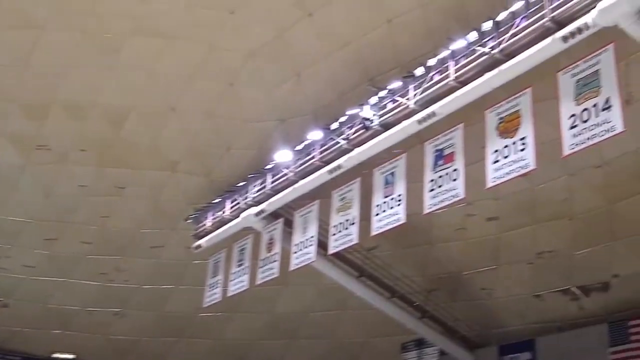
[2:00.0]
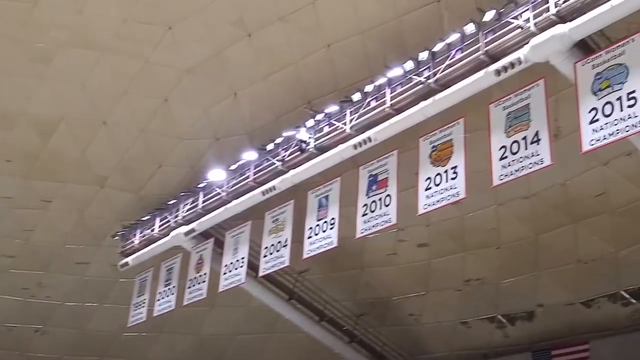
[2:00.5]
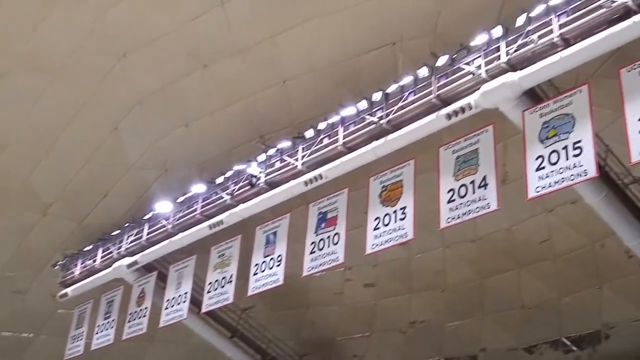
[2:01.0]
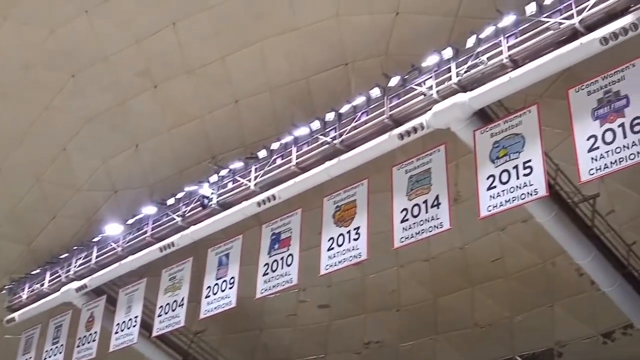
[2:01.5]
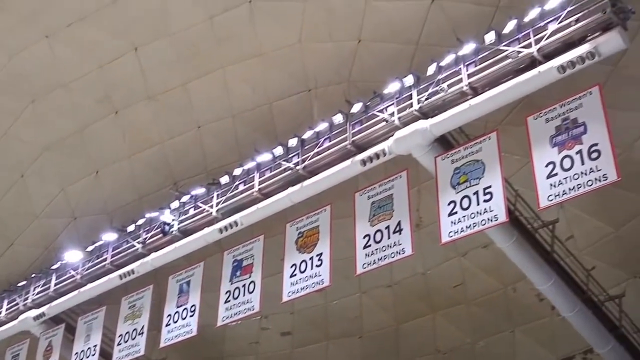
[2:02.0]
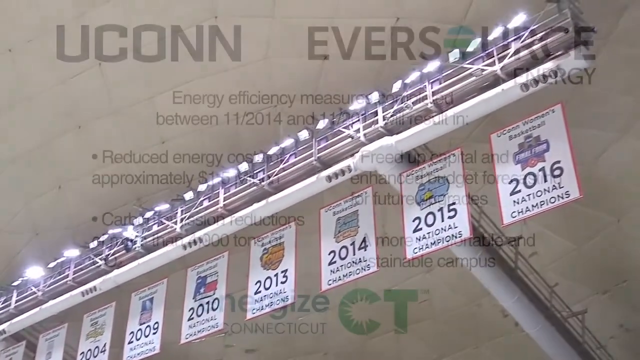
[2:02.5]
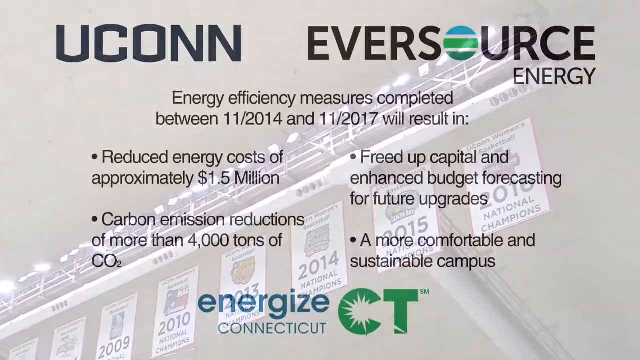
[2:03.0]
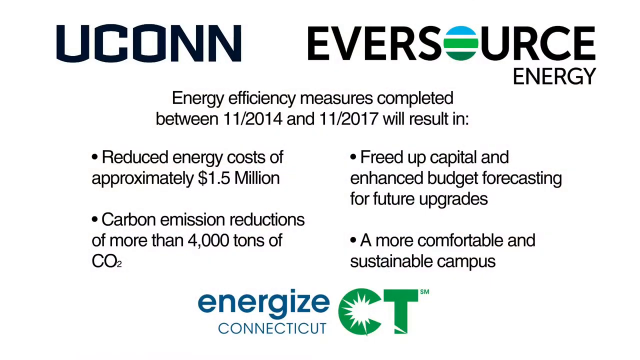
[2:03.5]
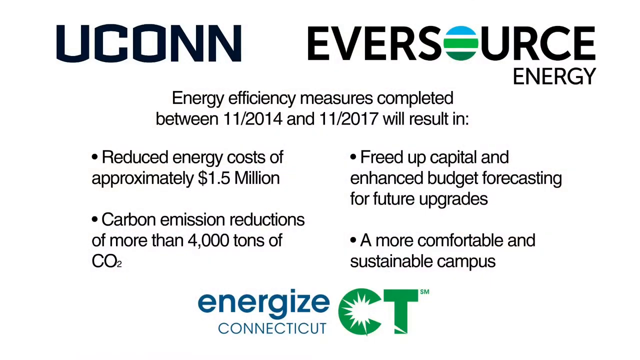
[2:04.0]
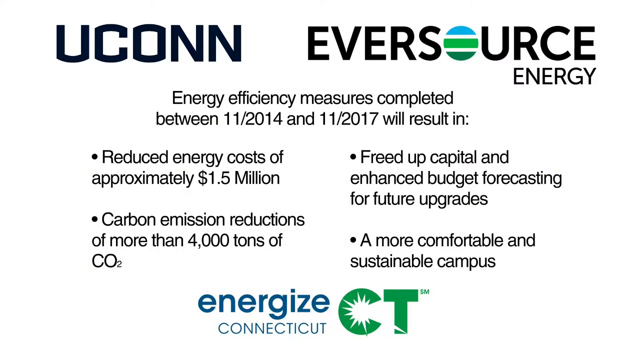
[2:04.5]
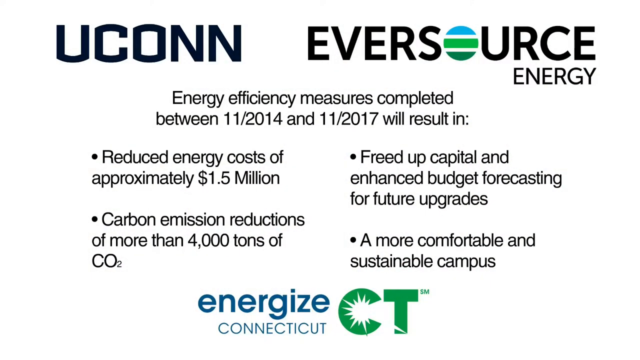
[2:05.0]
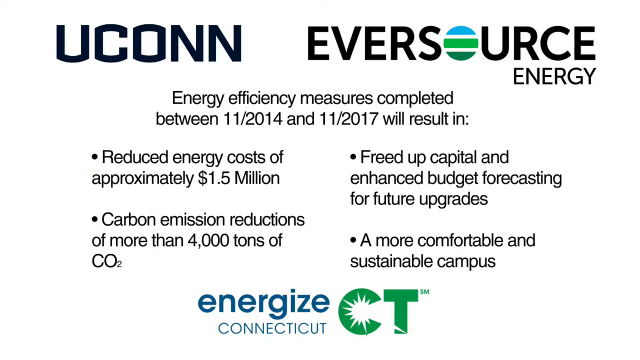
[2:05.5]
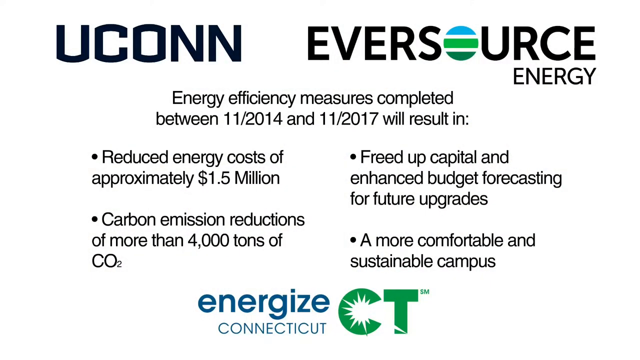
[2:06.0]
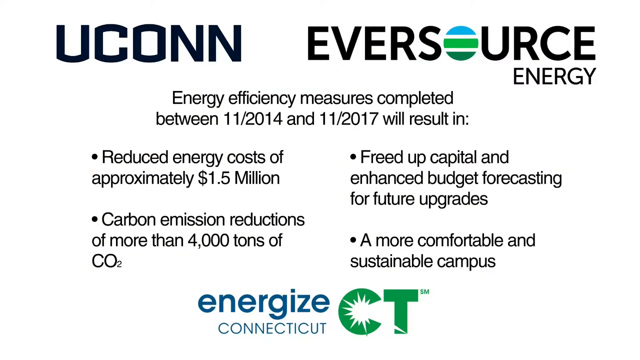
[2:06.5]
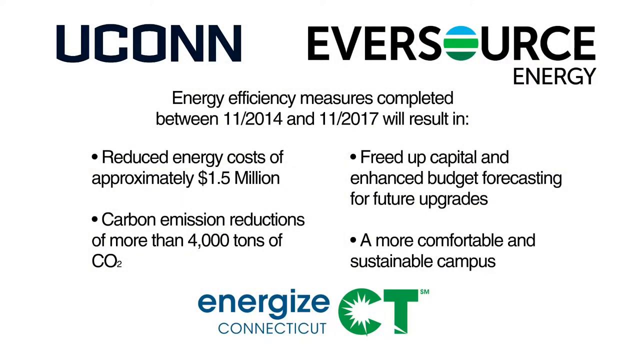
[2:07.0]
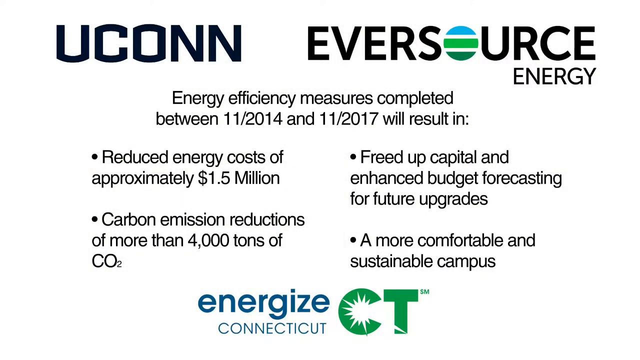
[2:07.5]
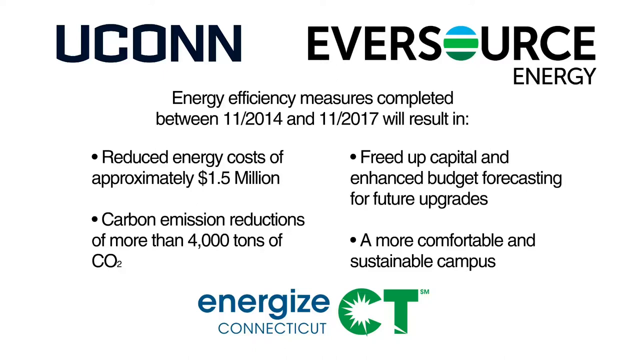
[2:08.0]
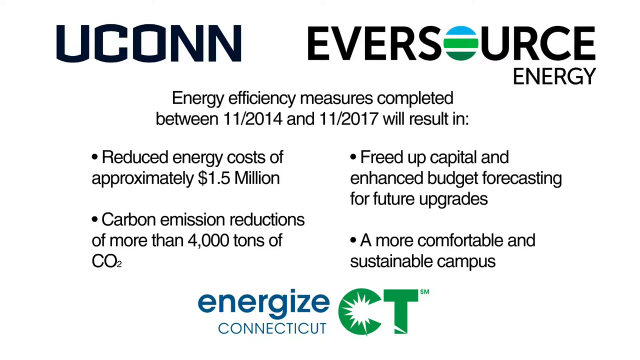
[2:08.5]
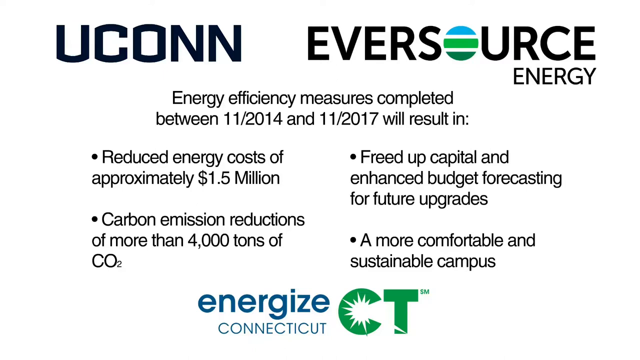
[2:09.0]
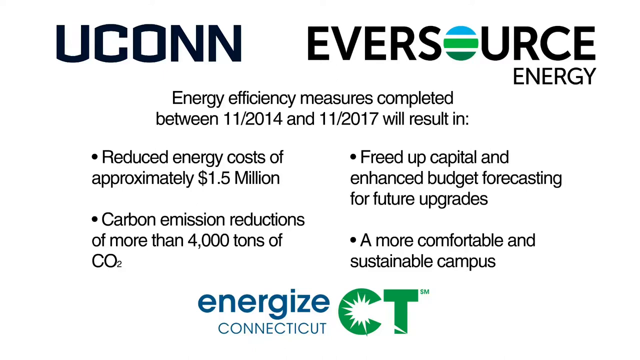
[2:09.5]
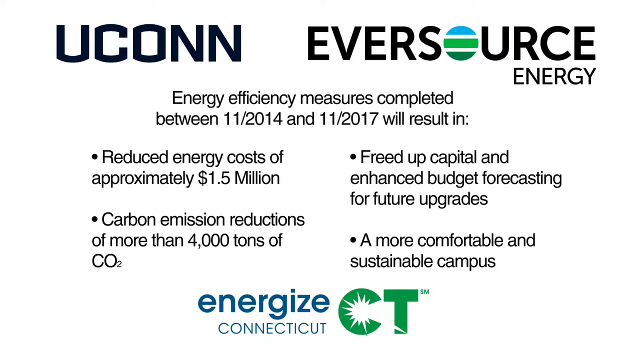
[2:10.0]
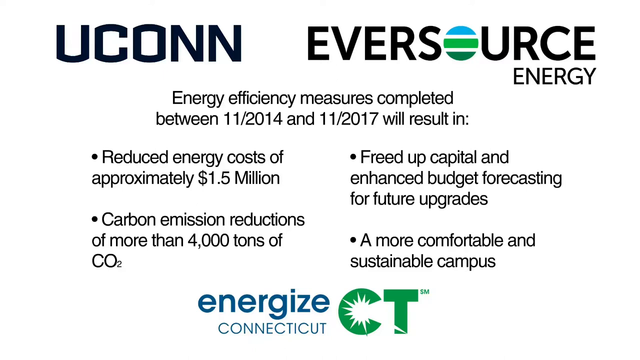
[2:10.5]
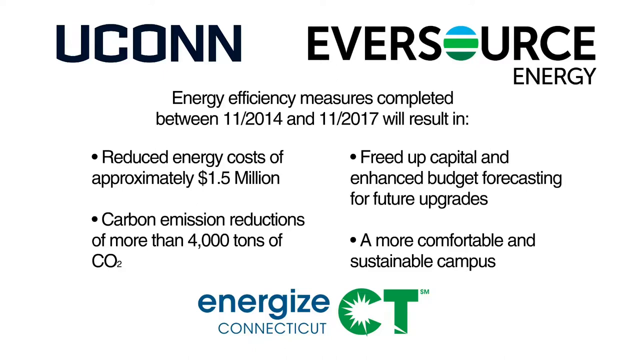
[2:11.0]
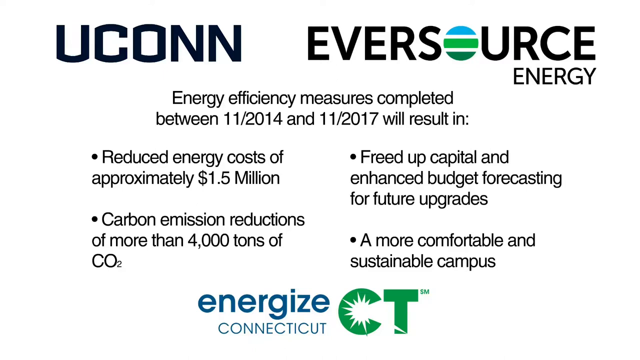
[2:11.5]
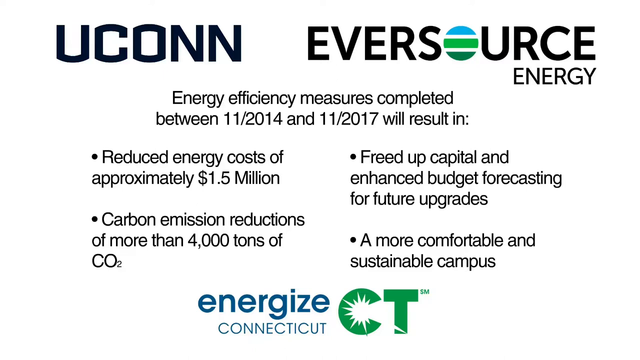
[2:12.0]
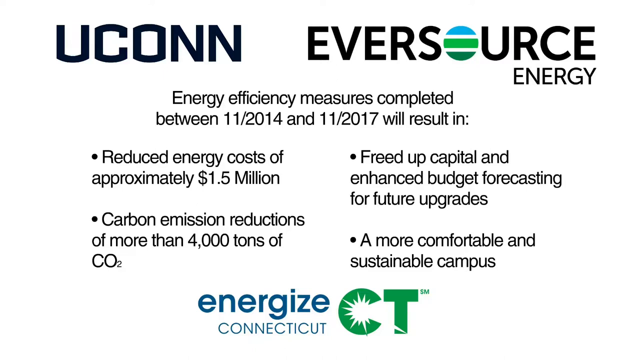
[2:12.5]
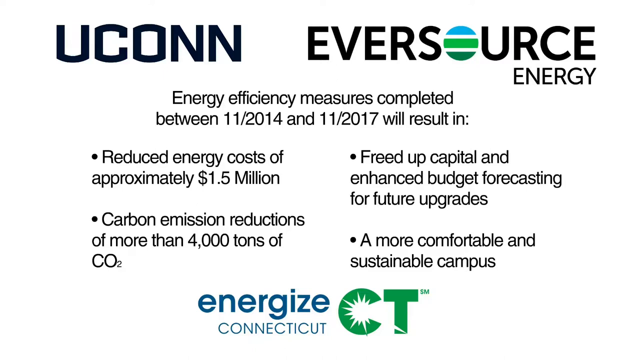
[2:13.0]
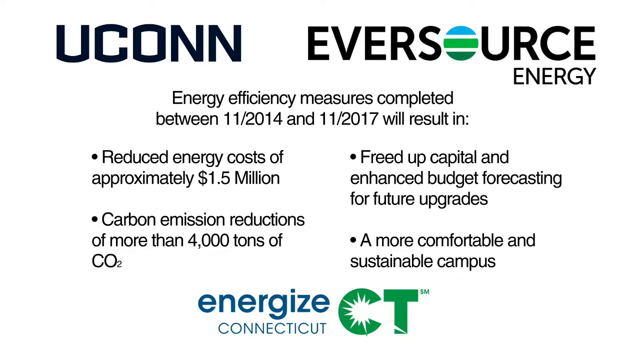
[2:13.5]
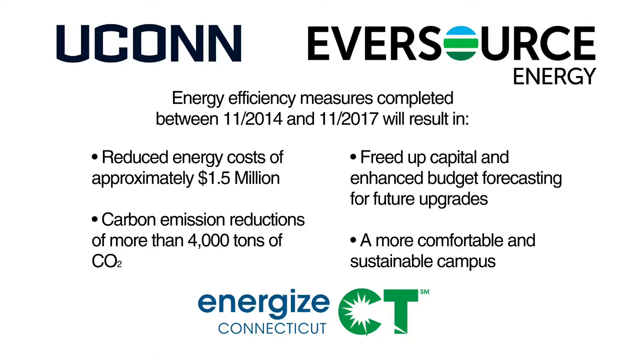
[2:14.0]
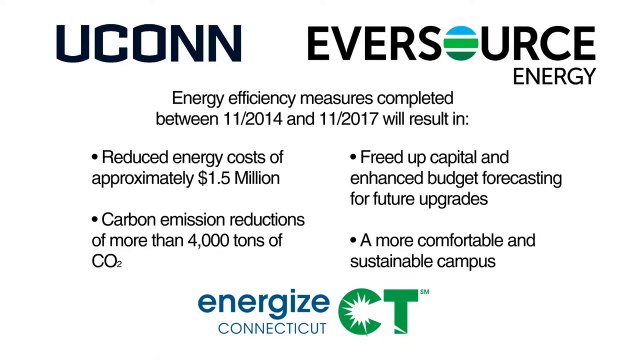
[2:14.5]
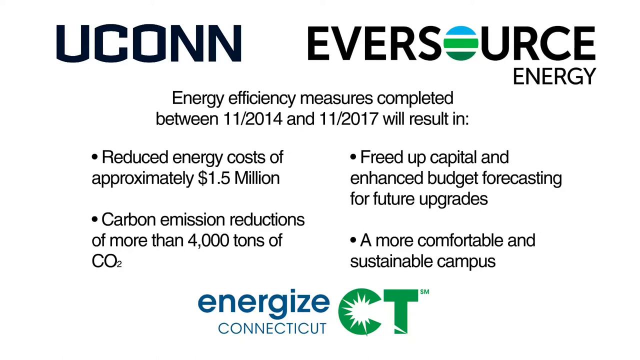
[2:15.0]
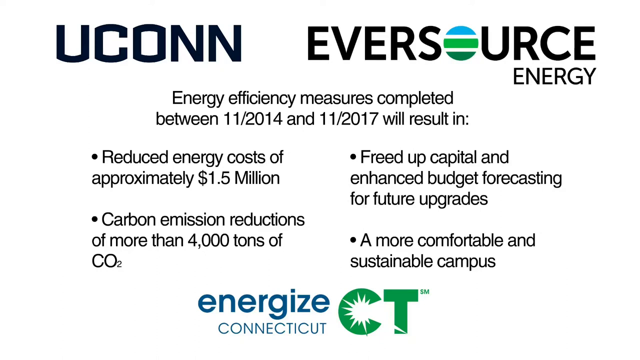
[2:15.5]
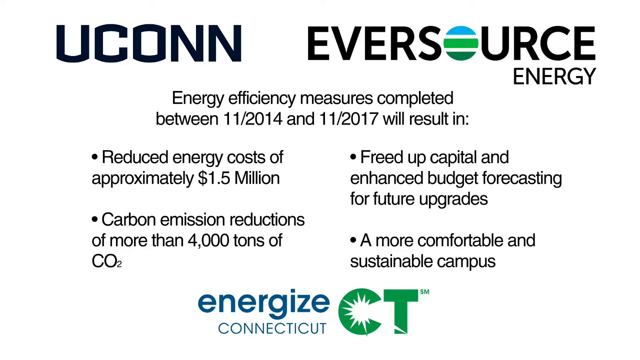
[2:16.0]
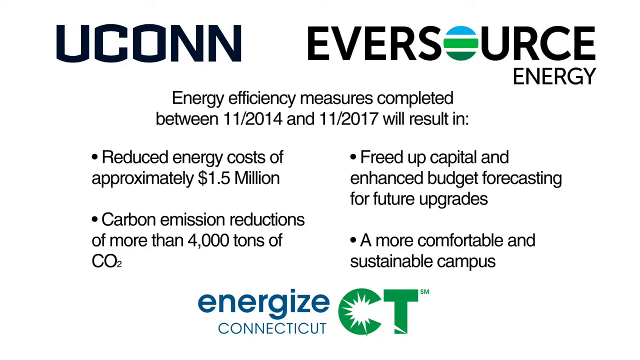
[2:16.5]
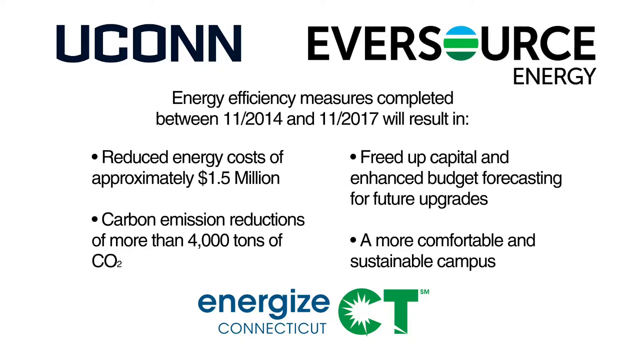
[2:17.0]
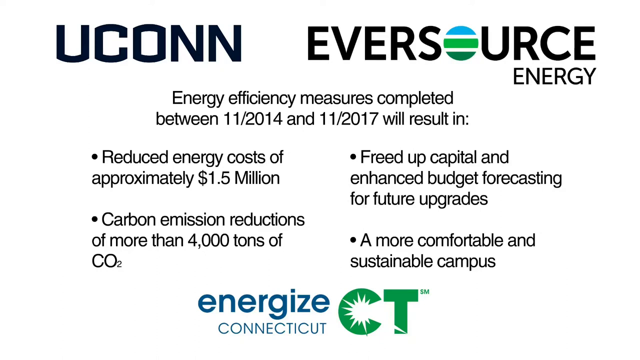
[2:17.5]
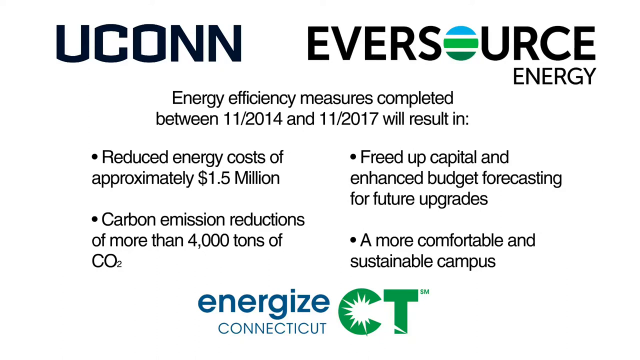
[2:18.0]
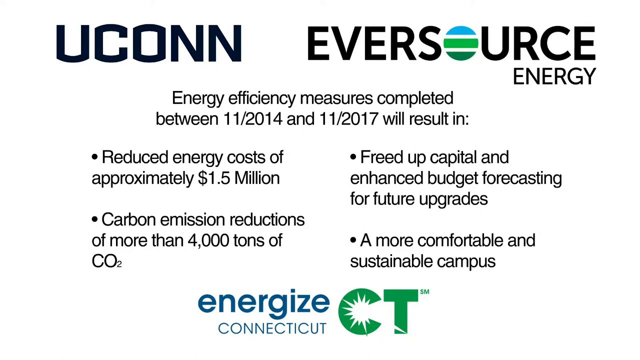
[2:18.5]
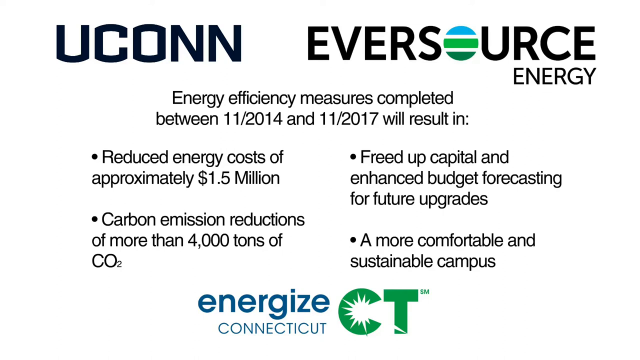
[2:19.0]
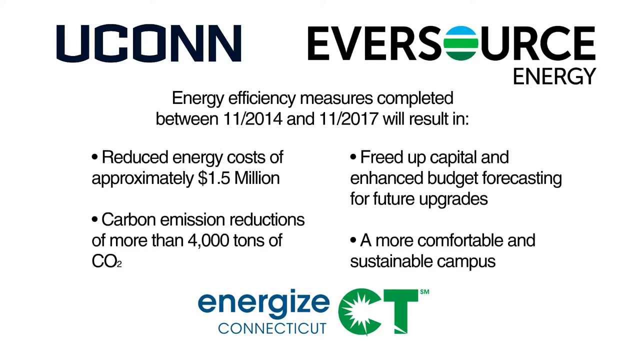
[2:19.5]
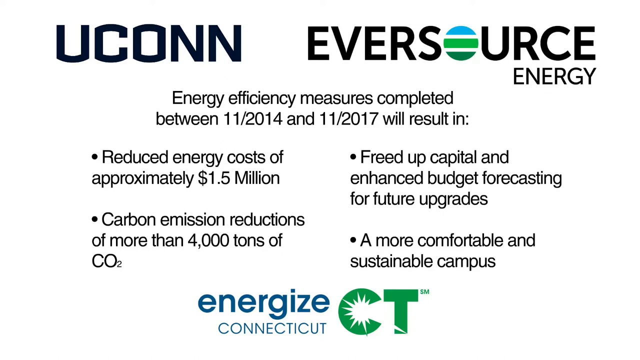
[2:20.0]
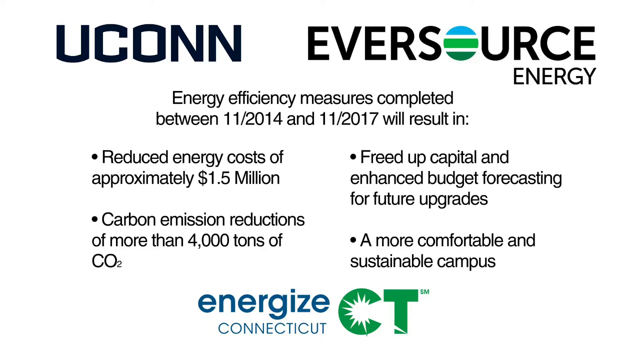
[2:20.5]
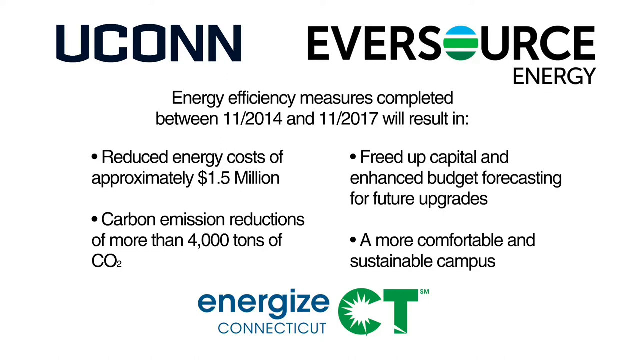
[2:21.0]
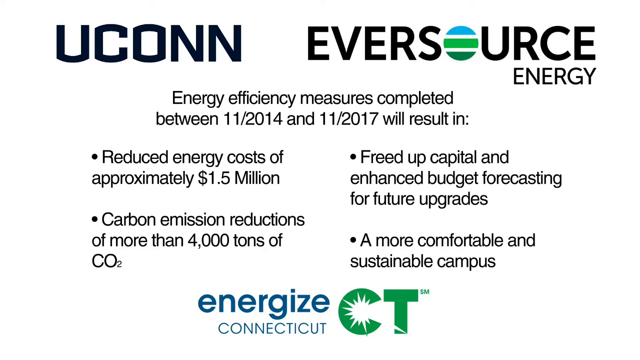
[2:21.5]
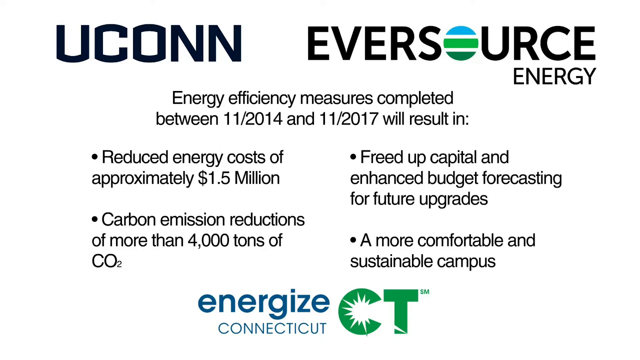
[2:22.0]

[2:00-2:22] A page resembling a website appears reading "the University of Connecticut Eversource Energy" and stating that "energy efficiency measures completed between November 2014 and November 2017 will result in reduced energy values of approximately $1.5 million", along with points about helping with global warming and climate change and improving air quality, "freeing up money and enhanced budget forecasting for future upgrades", and "a more comfortable and sustainable campus". The last logo is "Energize Connecticut".